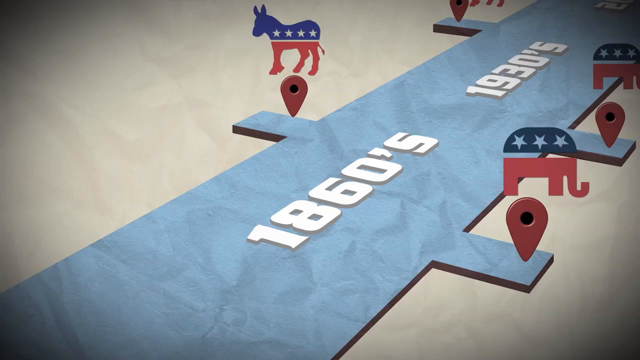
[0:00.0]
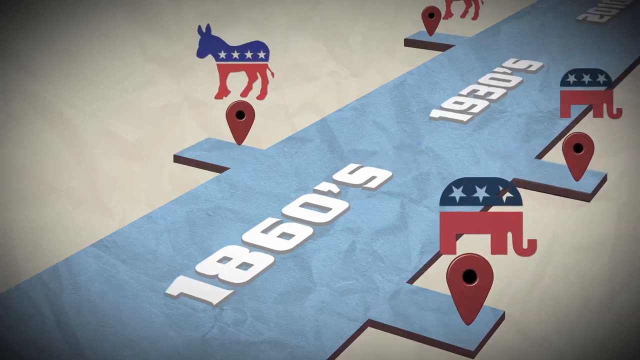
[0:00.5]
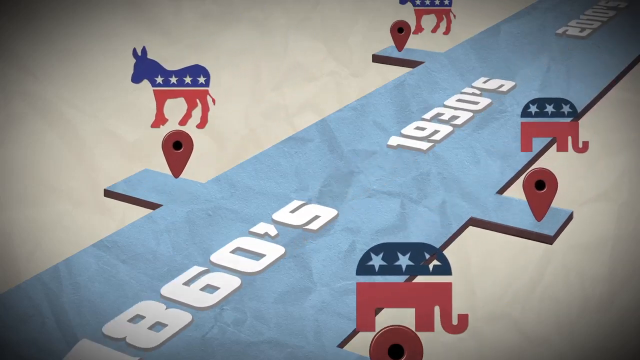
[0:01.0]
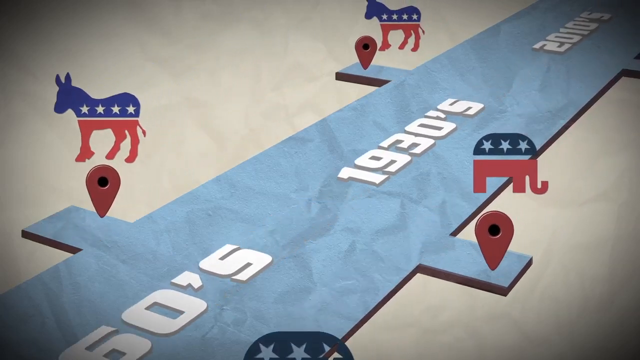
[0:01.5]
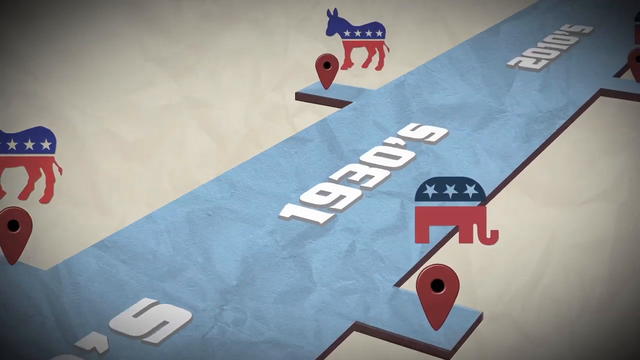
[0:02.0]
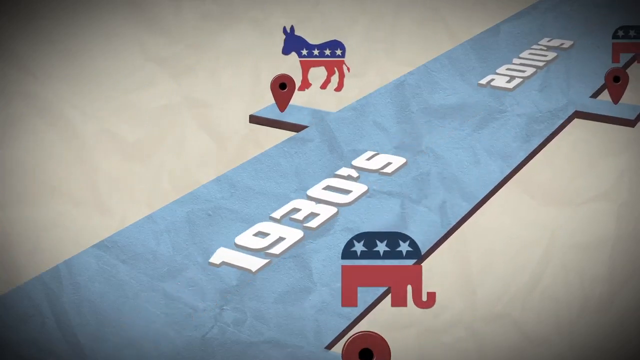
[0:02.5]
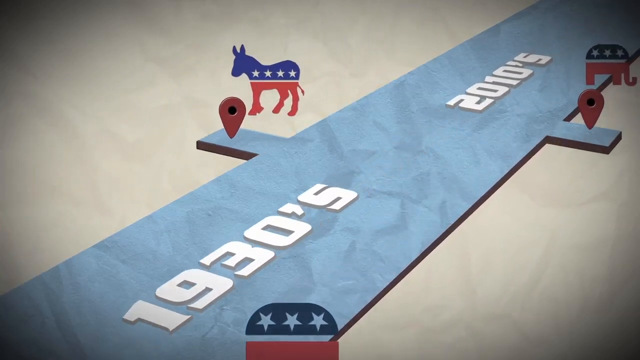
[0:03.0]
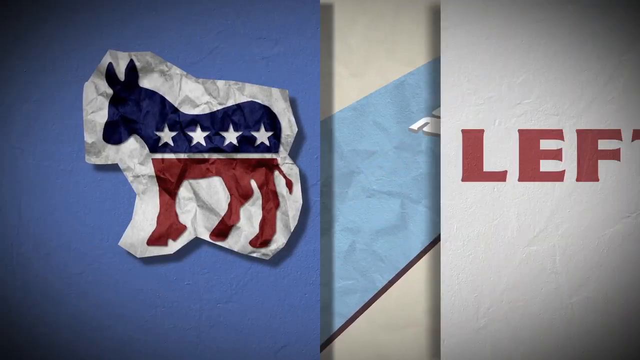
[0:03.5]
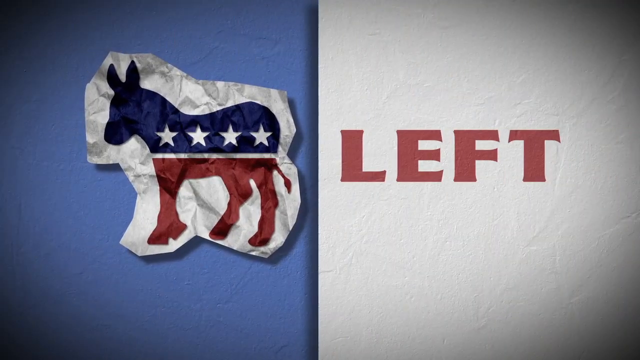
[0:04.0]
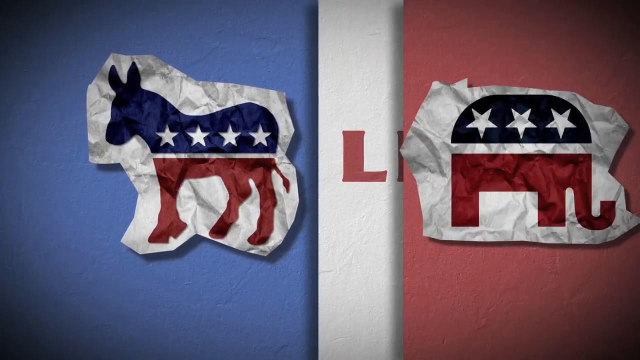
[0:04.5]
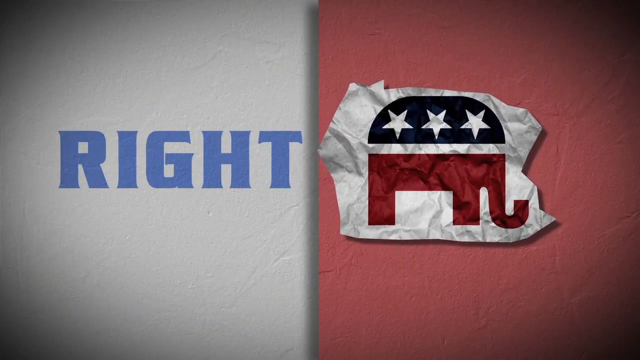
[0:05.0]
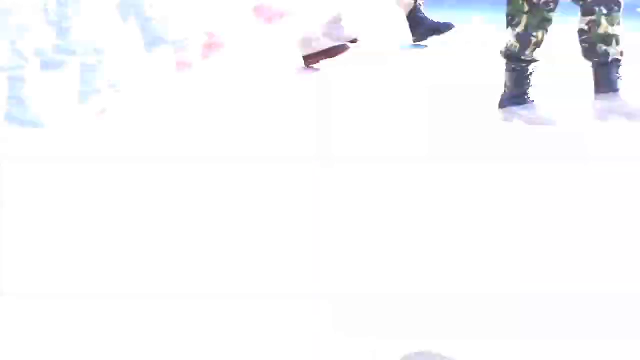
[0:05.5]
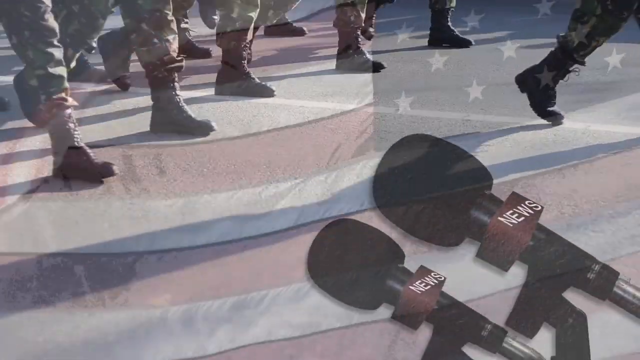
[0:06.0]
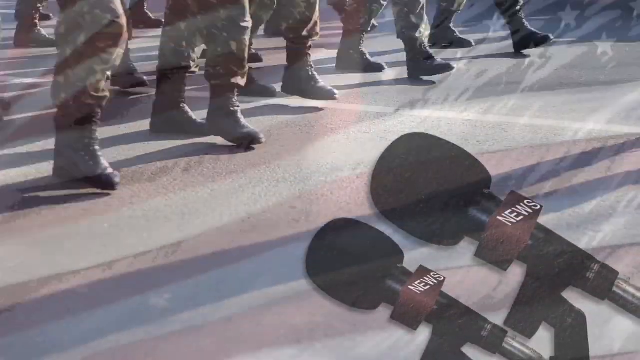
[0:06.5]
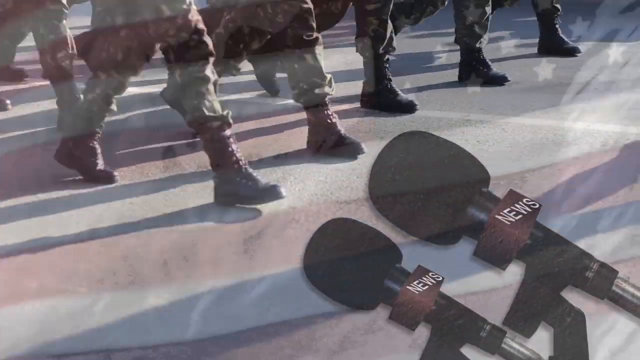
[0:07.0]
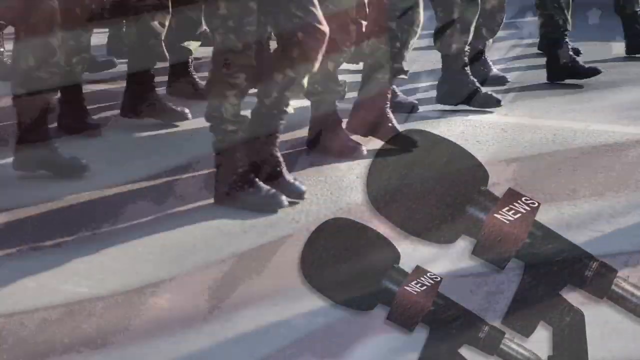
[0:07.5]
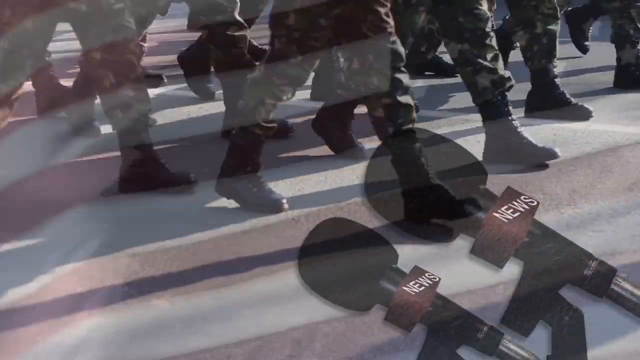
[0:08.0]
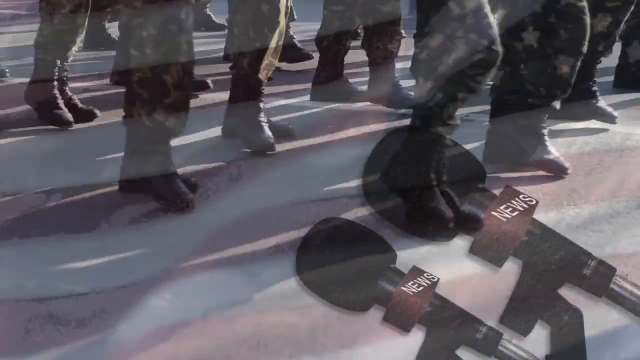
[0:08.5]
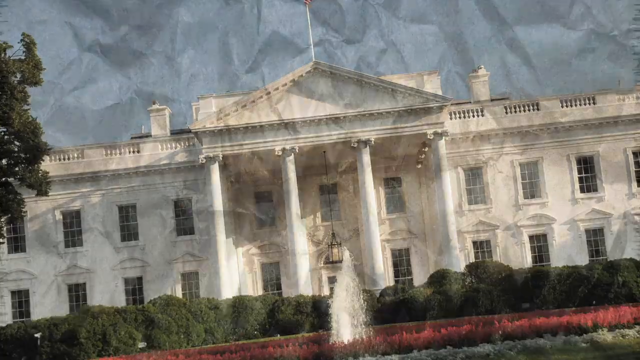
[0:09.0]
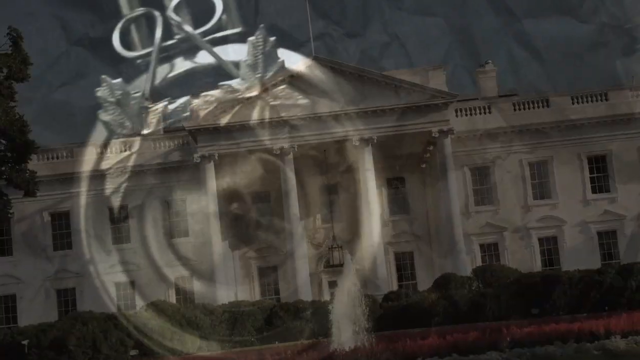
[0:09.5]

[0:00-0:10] An elephant is on the left side and, on the right side, an animal that looks like a donkey; both are made to look like they are wearing the American flag. The scene moves down like a game, and a location point sign appears. Next, the feet and legs of a group of soldiers are seen moving as they go somewhere, with a microphone marked "news" pointing at them. Where the elephants move there is a blue surface that looks like a carpet, and it moves down. The text "1930s" and "2010s" appears. The White House building is also shown.